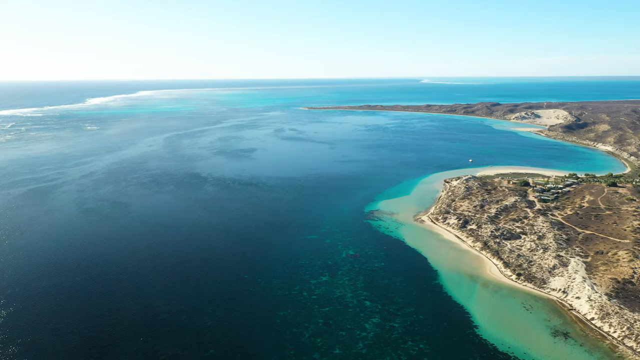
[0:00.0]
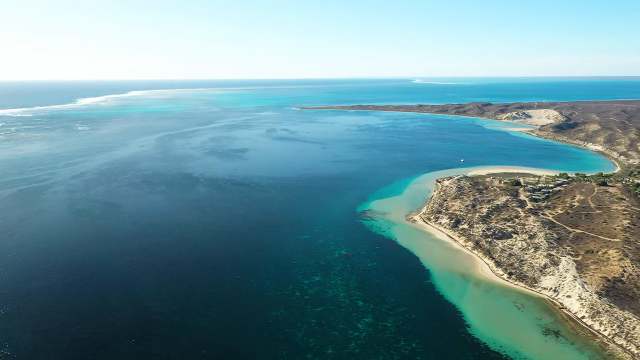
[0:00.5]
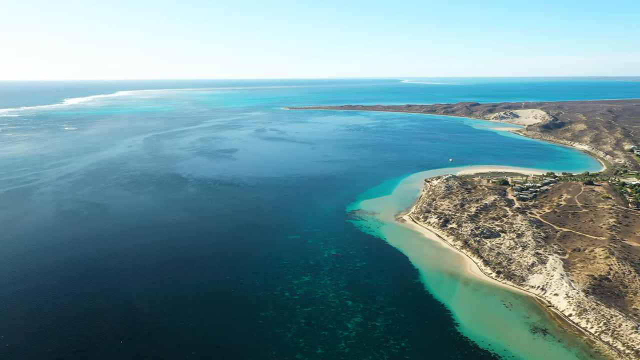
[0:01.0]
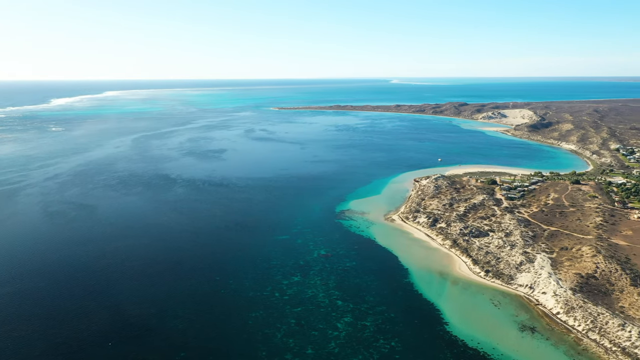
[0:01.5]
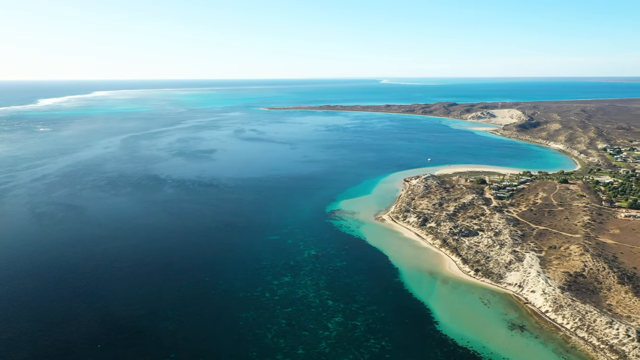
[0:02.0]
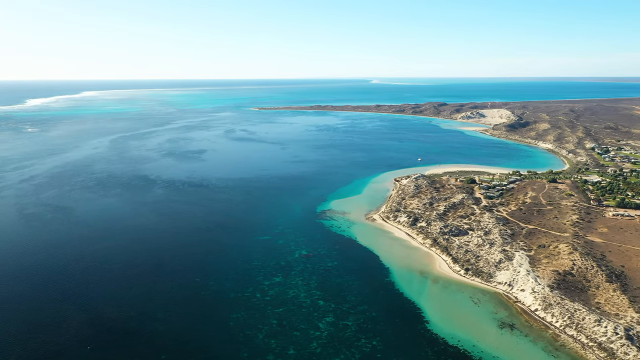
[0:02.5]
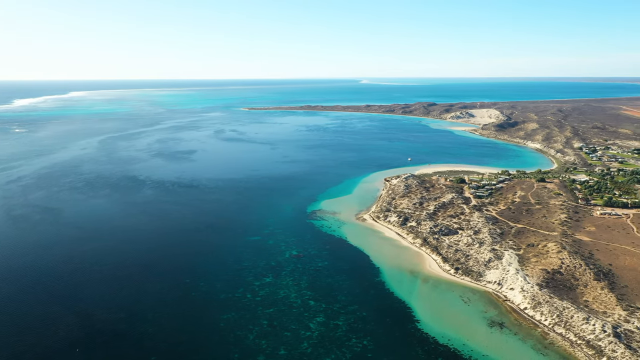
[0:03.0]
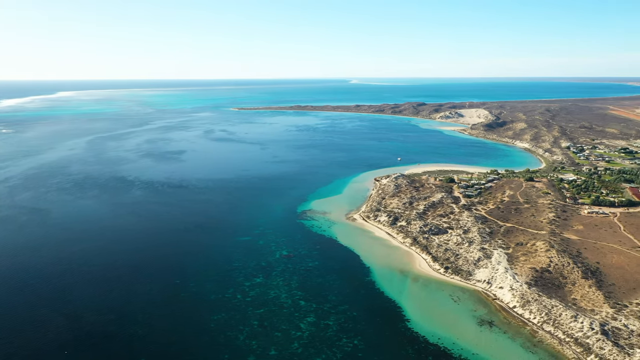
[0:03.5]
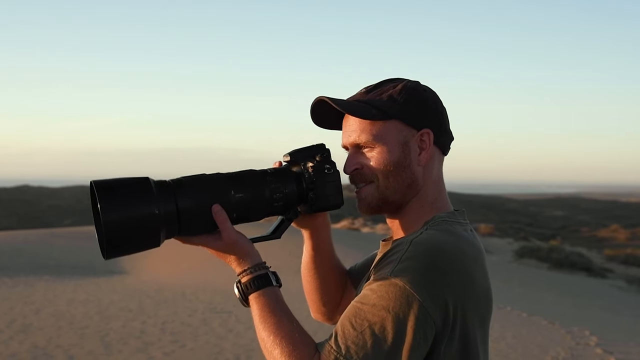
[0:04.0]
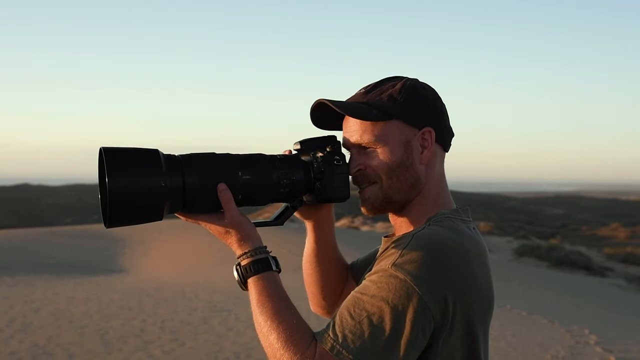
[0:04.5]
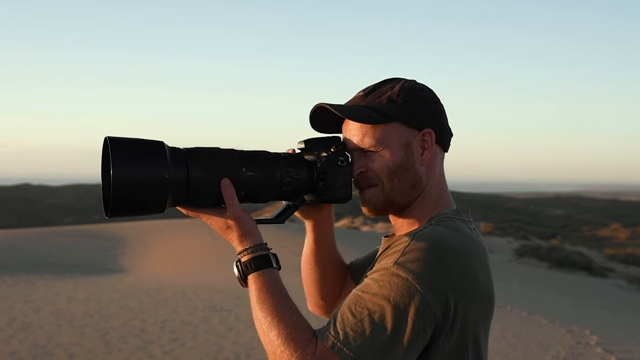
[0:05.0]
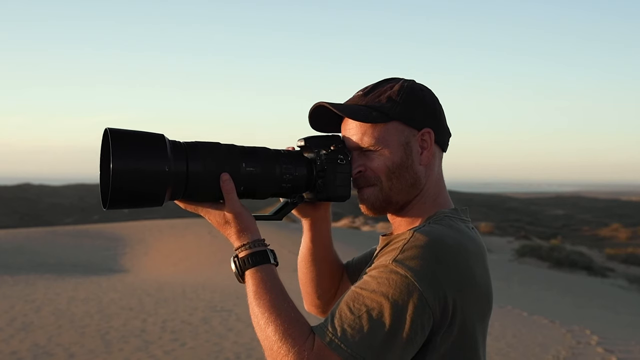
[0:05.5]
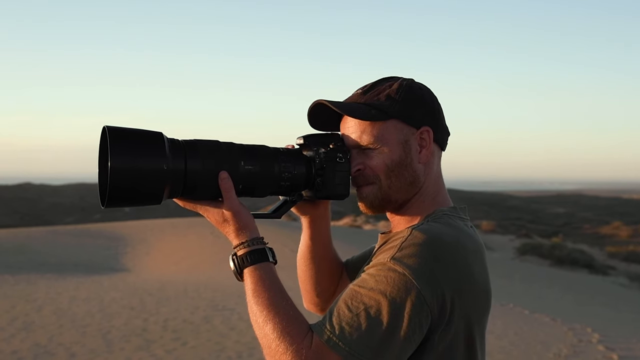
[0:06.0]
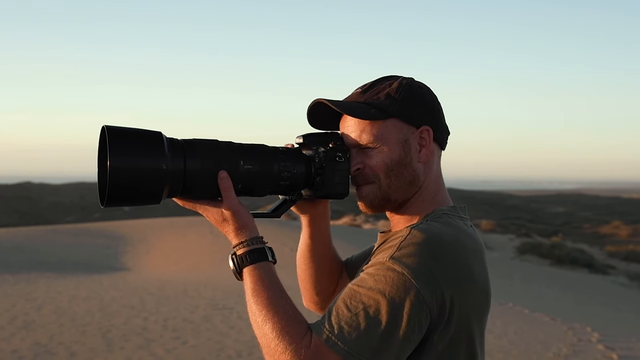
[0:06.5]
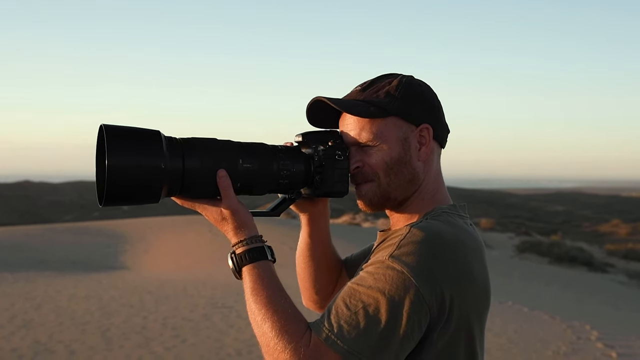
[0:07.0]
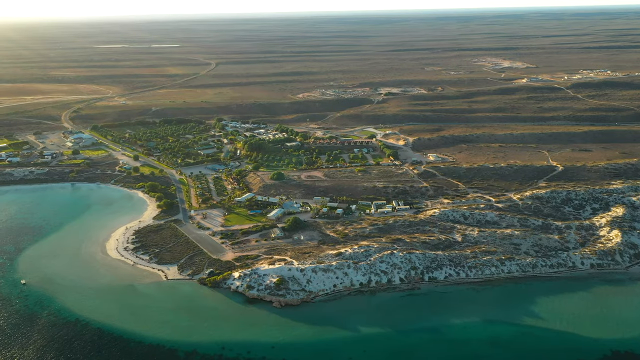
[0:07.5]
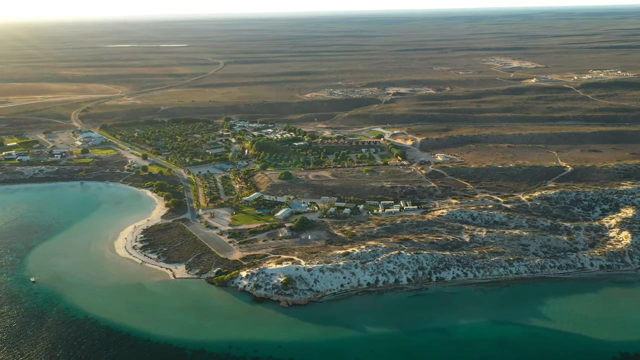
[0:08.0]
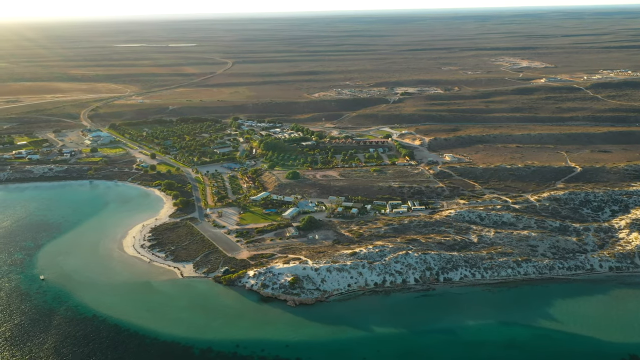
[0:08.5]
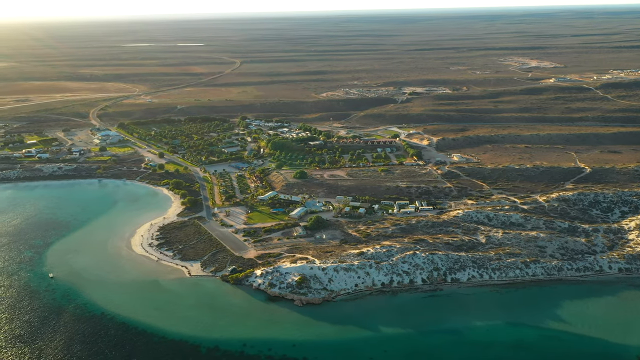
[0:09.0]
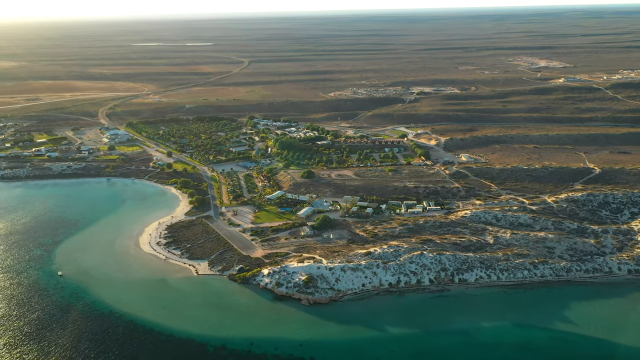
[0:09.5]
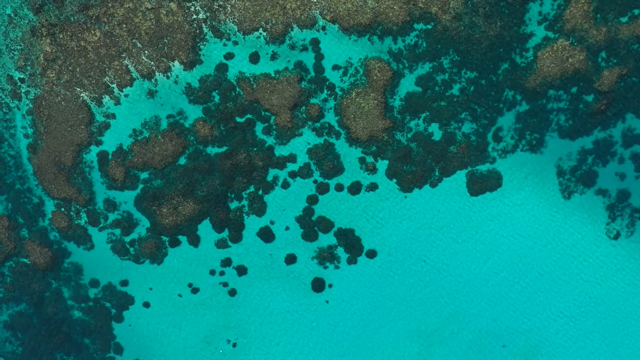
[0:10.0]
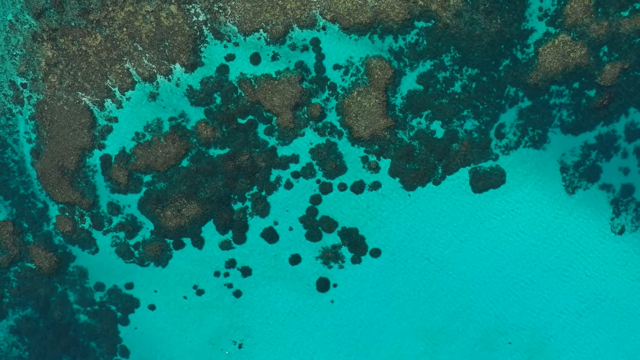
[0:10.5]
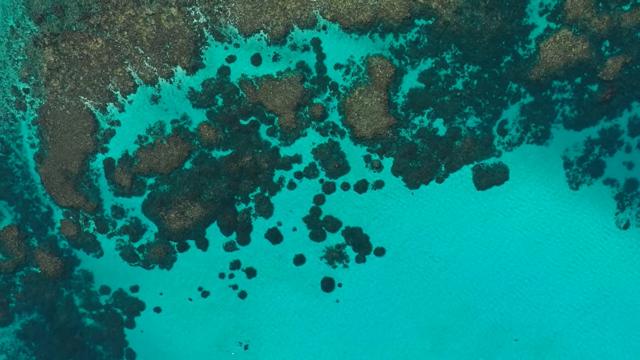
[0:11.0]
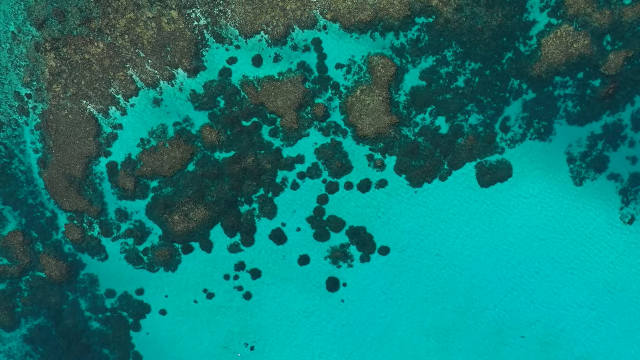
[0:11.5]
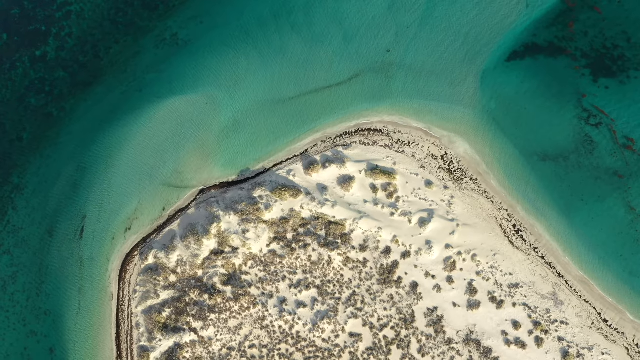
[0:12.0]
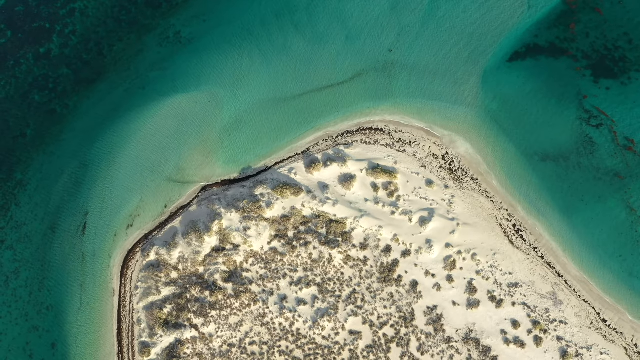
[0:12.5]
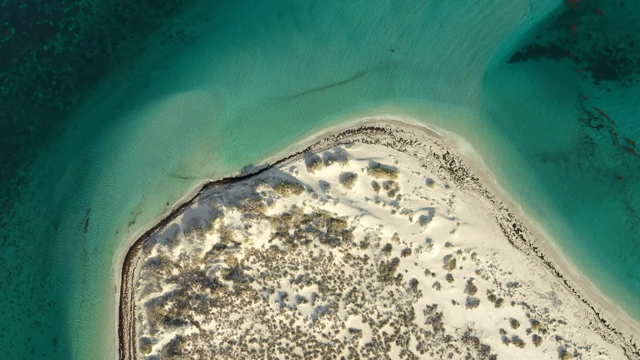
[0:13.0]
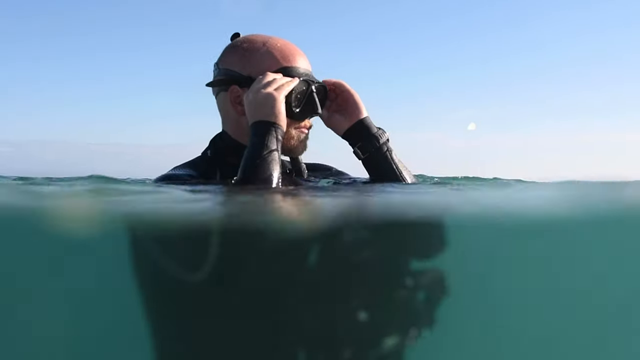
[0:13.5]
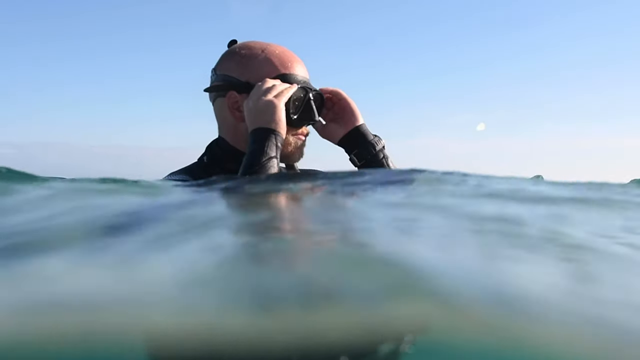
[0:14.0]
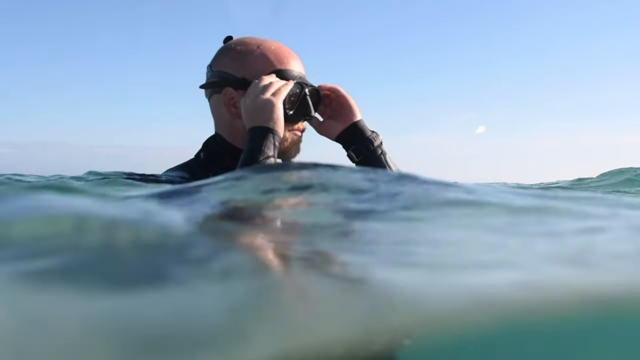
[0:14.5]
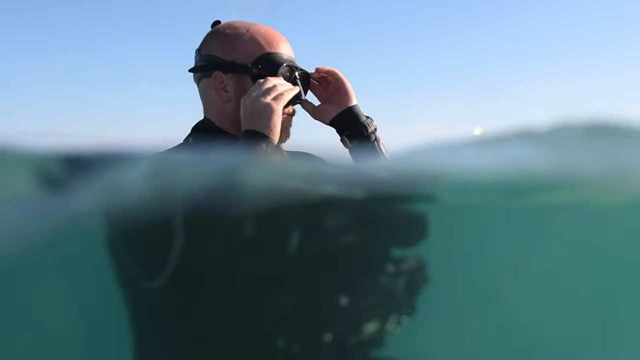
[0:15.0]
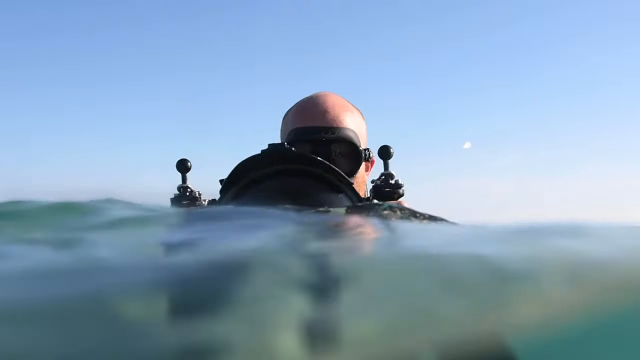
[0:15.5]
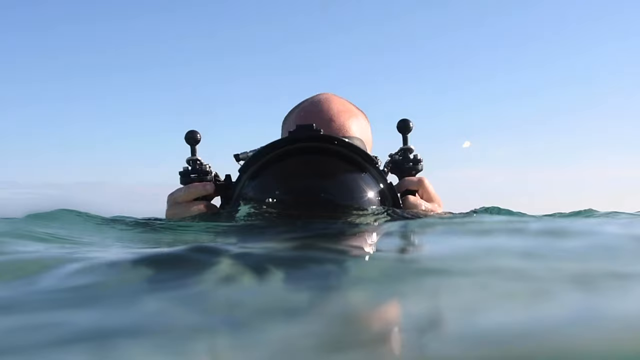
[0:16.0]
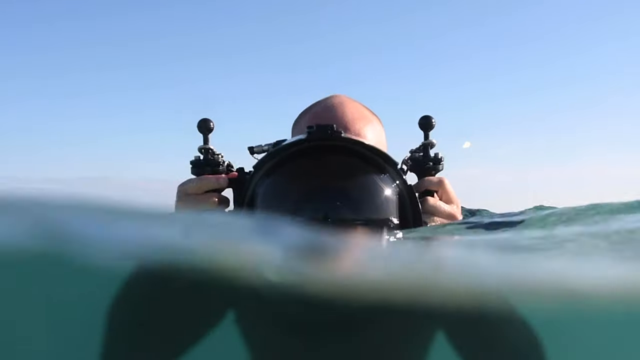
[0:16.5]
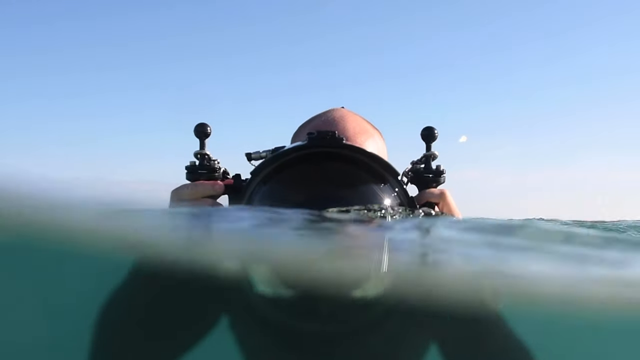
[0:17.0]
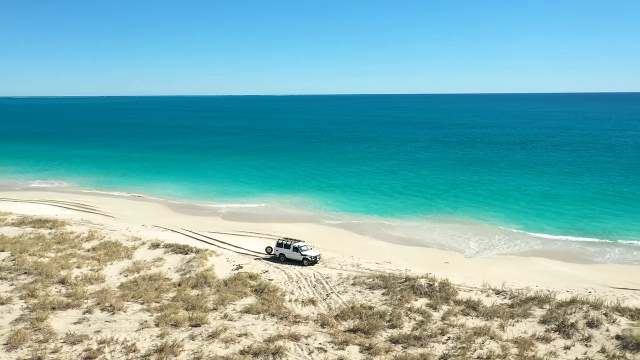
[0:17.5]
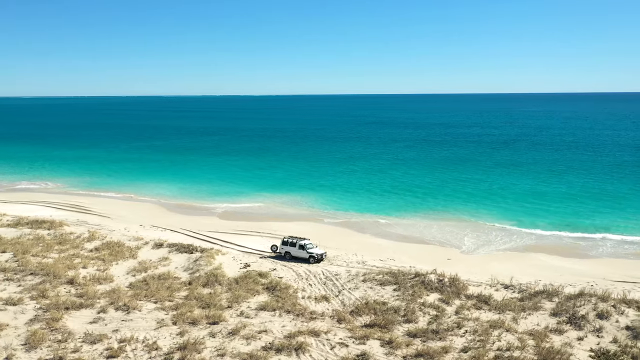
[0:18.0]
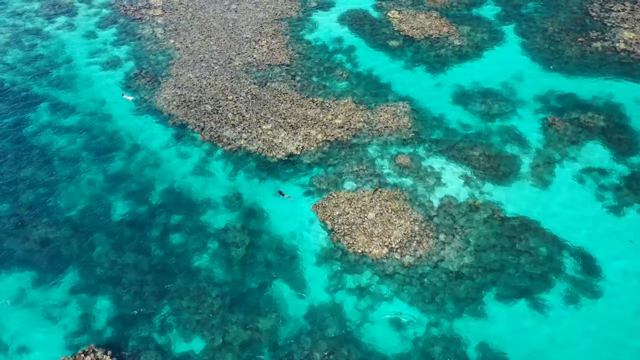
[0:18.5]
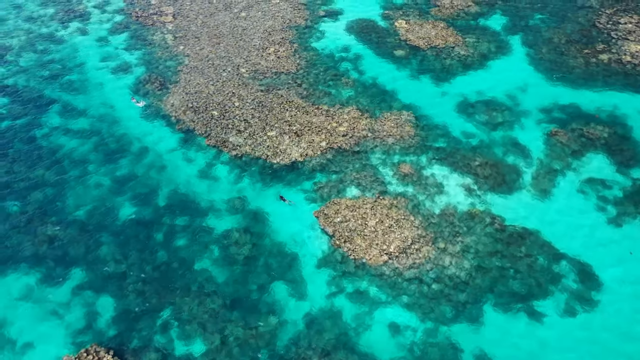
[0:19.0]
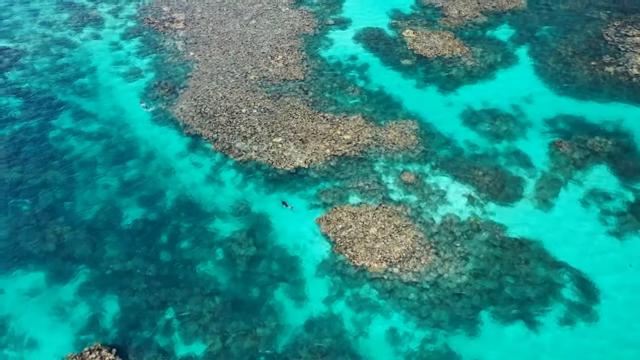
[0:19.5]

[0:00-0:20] An aerial view from above shows a stretch of water and a beach around the coast. The scene transitions to a man using a very long telephoto lens; he is seen from the side as he lifts his hand up and focuses his eyes on something in the distance. The image then changes to a coastal region where one particular area has lots of green trees, while the areas around it are more arid and brown, with what appear to be rocky cliffs on the coast. An overhead view of what looks like a coral reef follows, then an overhead view of a beachy island area. A man diving in the water has his head above the water and is positioning his goggles. He is then using what is probably an underwater camera, still with his head above the water, both hands at the water level and the camera just at the water surface. Finally, a white jeep, something like a Land Rover style jeep, is positioned in the distance along a white beach adjacent to the ocean.